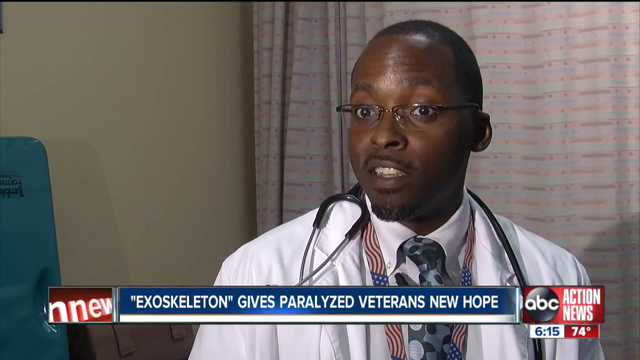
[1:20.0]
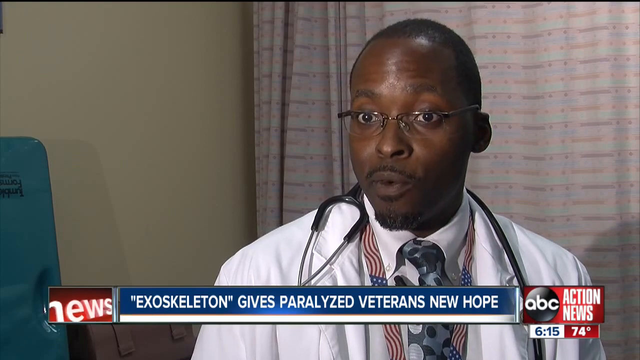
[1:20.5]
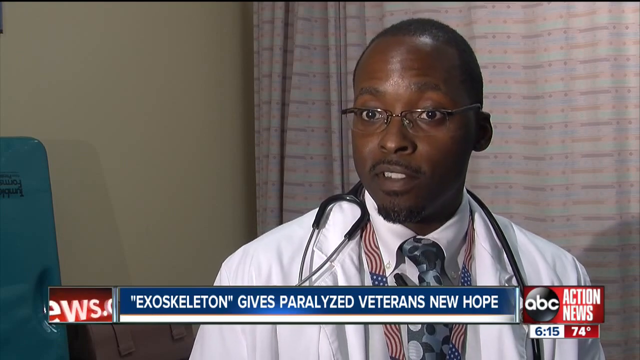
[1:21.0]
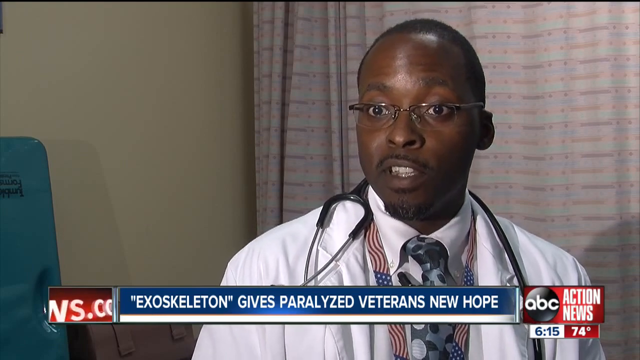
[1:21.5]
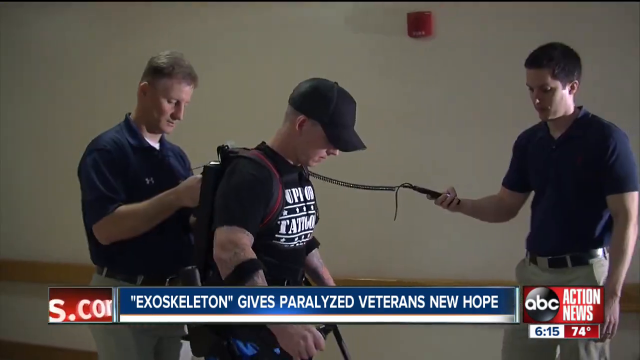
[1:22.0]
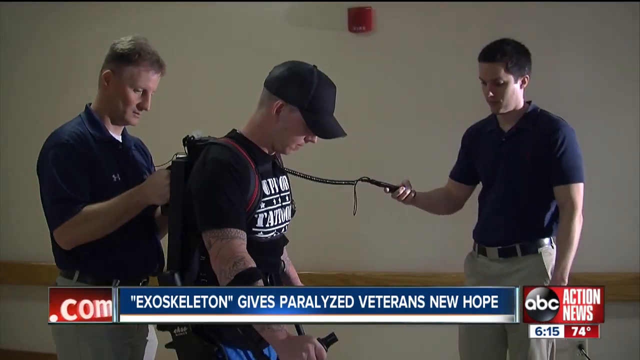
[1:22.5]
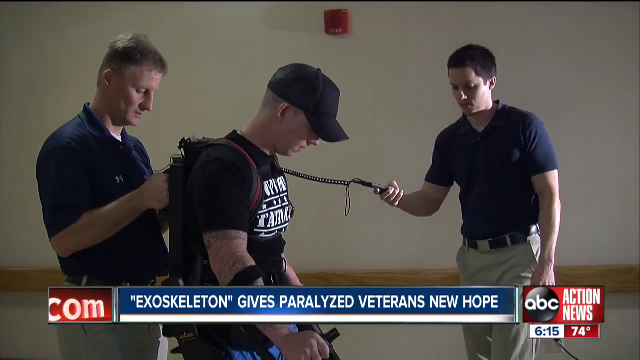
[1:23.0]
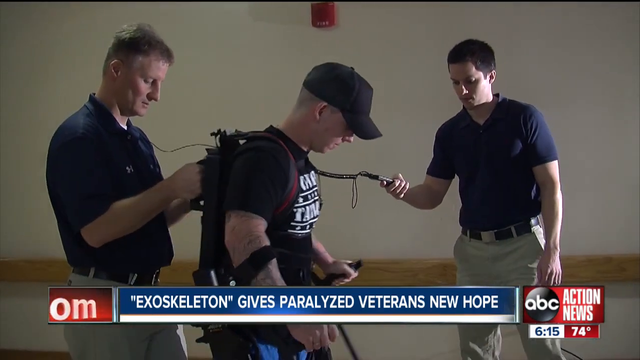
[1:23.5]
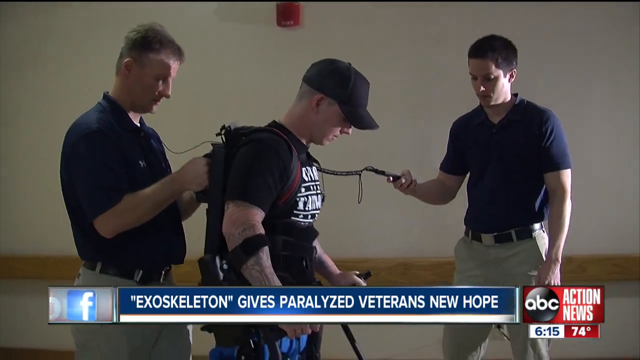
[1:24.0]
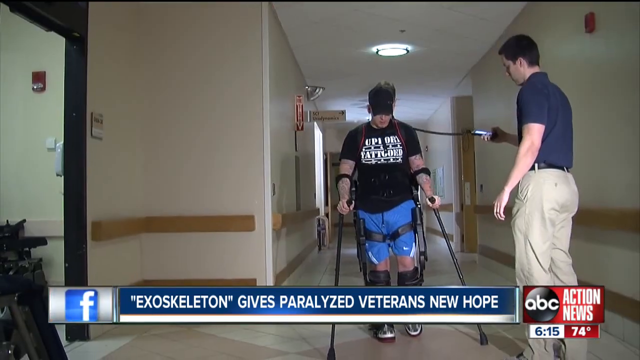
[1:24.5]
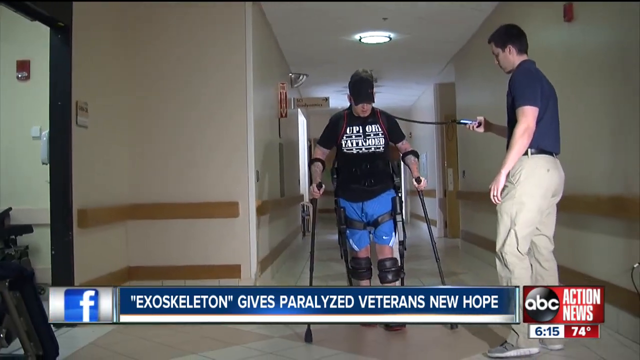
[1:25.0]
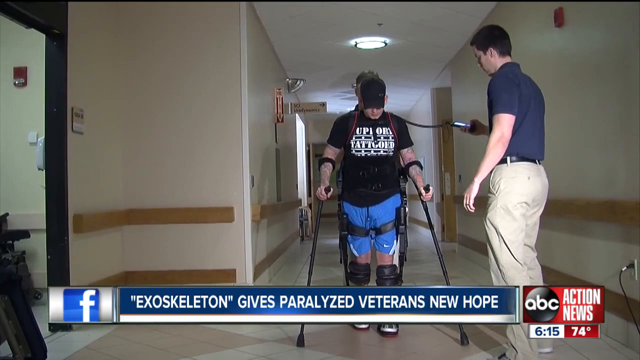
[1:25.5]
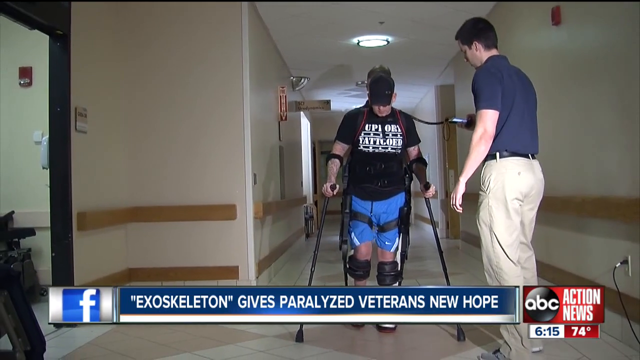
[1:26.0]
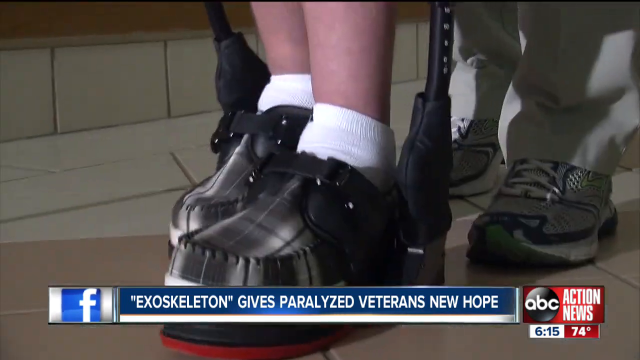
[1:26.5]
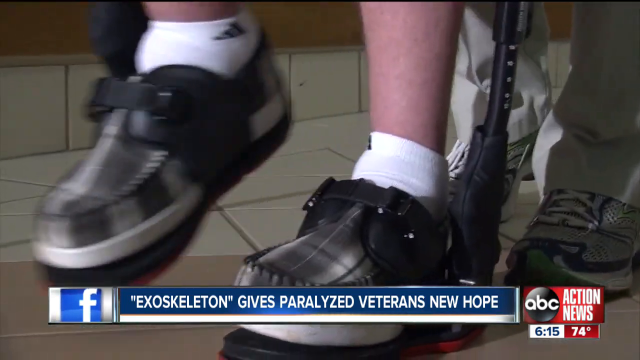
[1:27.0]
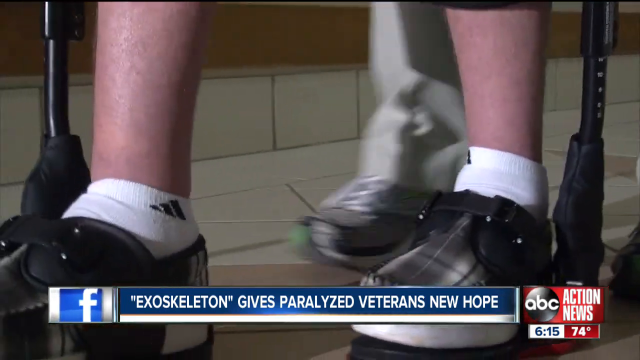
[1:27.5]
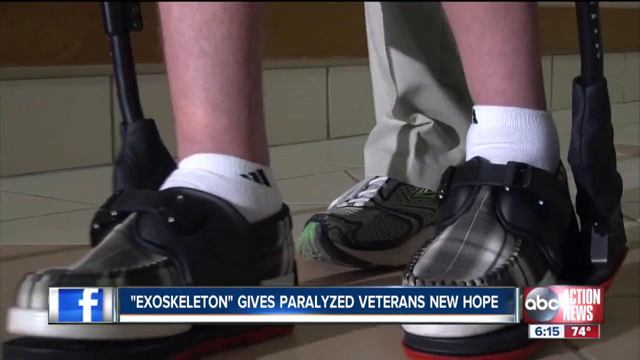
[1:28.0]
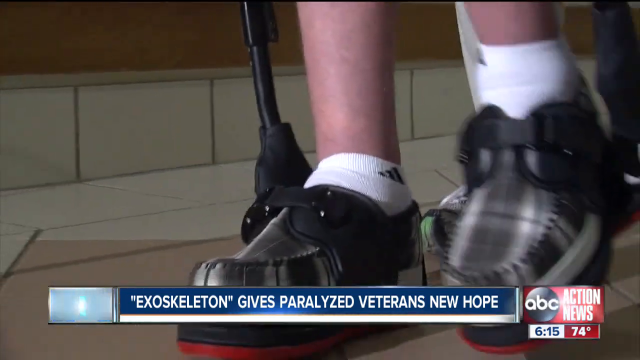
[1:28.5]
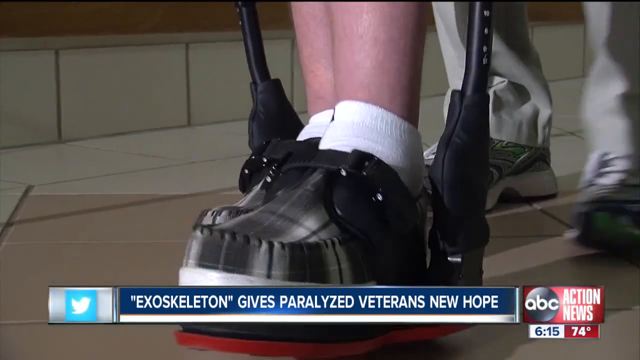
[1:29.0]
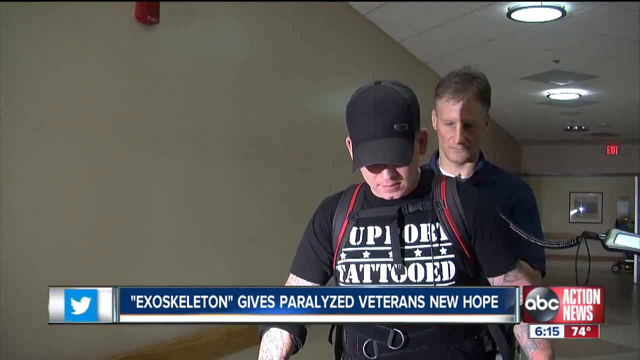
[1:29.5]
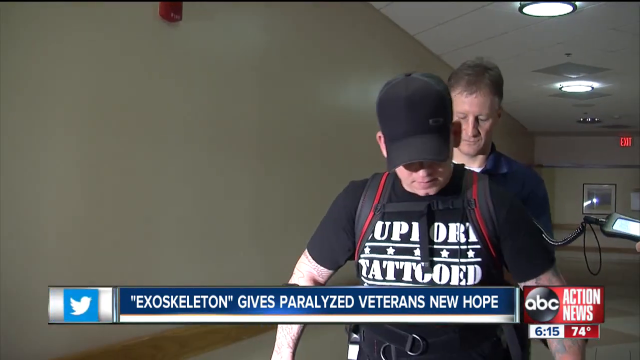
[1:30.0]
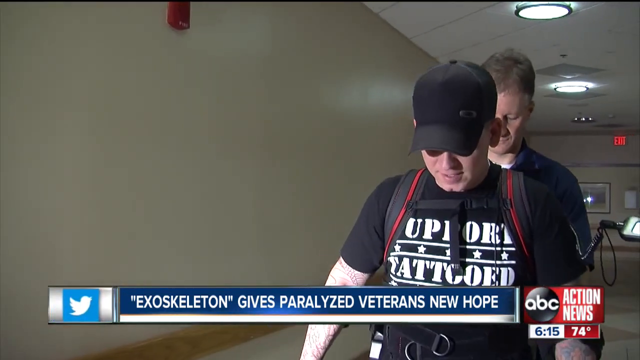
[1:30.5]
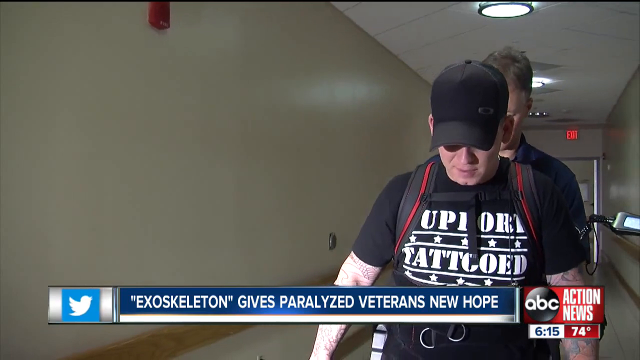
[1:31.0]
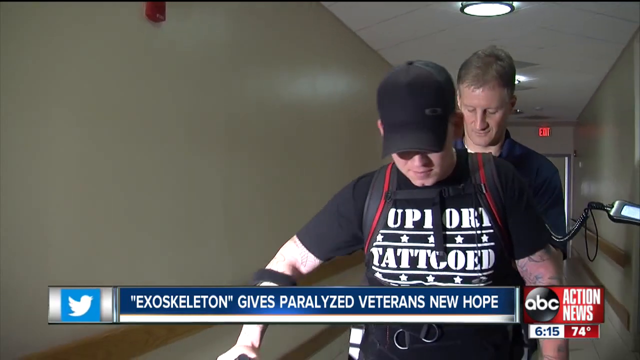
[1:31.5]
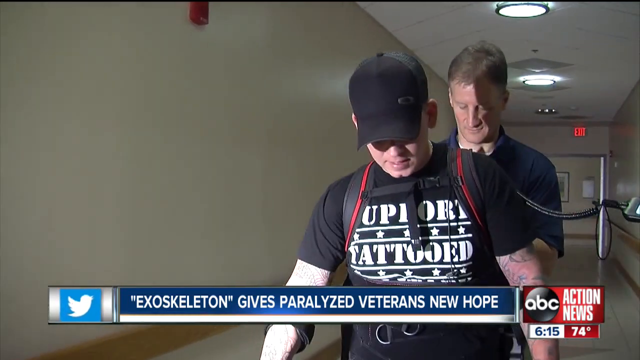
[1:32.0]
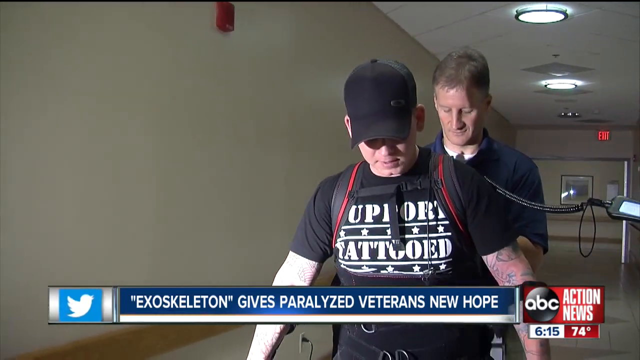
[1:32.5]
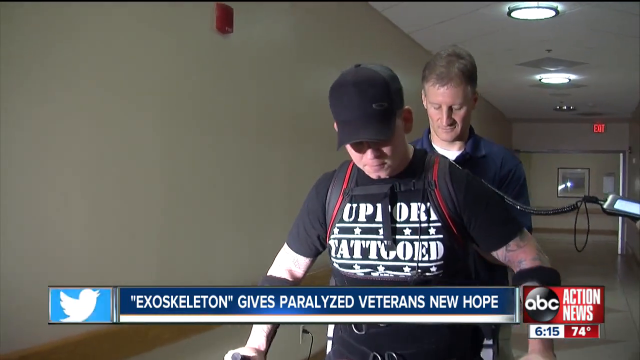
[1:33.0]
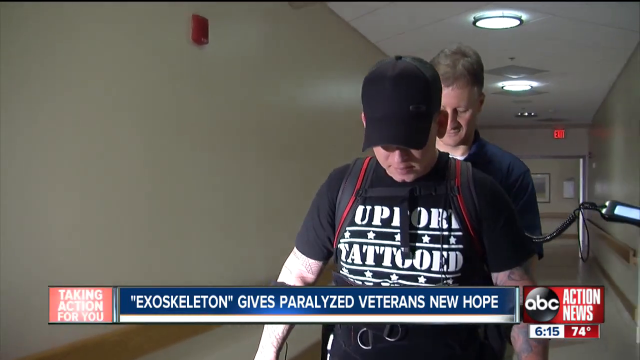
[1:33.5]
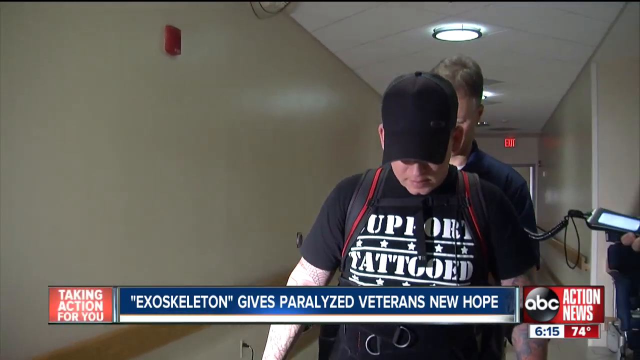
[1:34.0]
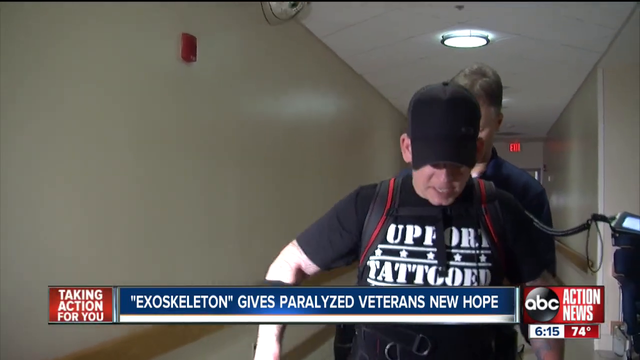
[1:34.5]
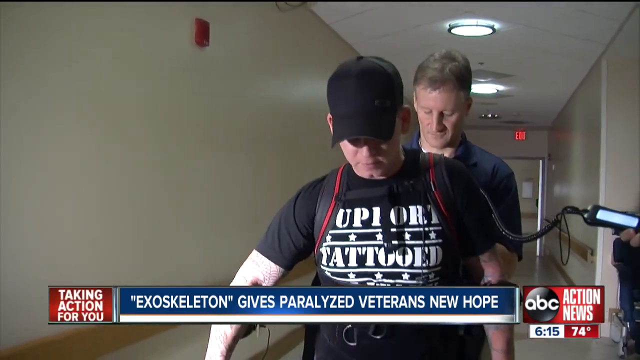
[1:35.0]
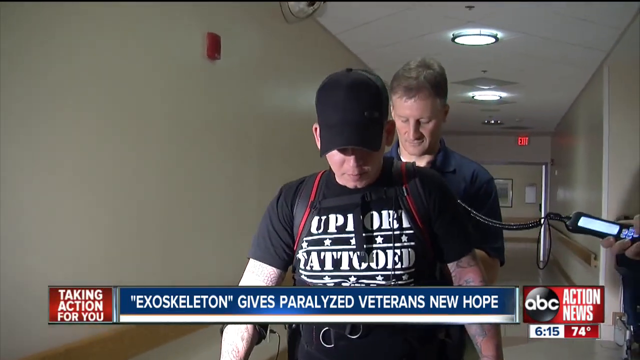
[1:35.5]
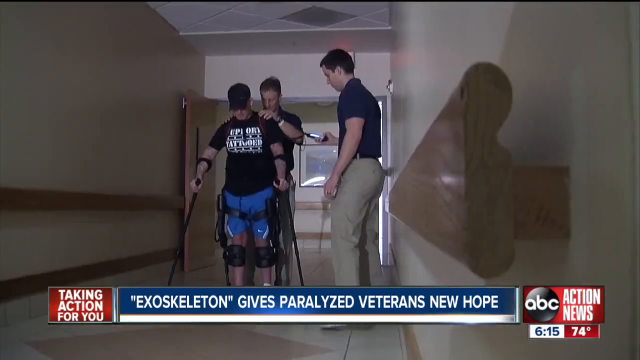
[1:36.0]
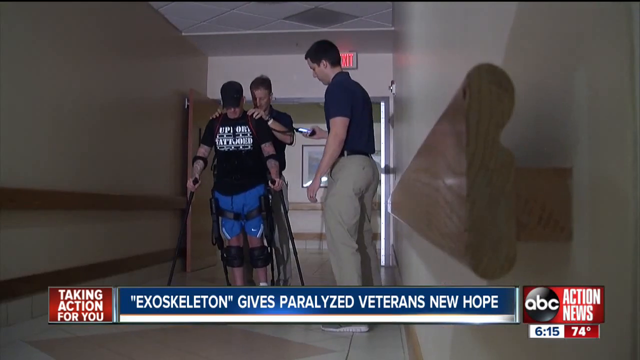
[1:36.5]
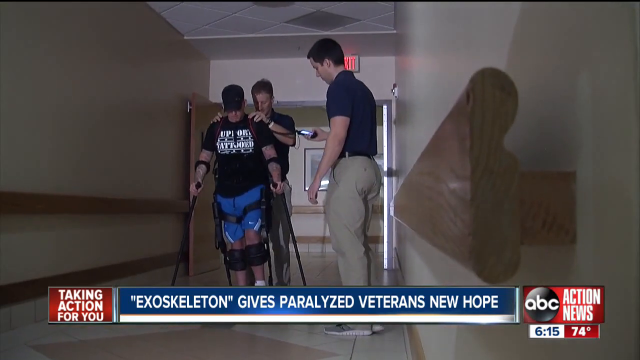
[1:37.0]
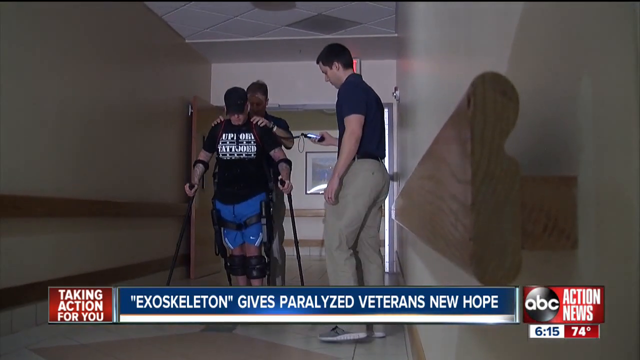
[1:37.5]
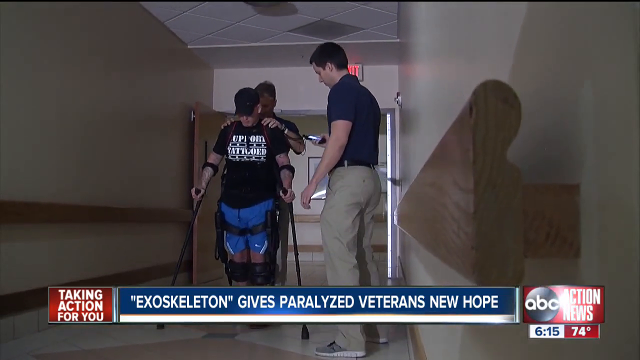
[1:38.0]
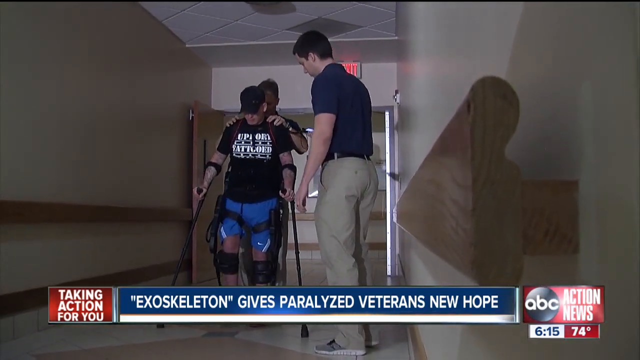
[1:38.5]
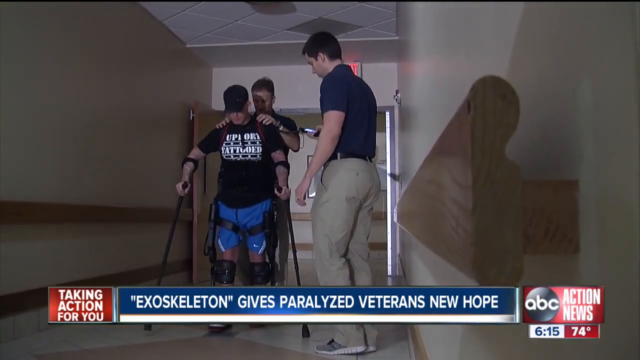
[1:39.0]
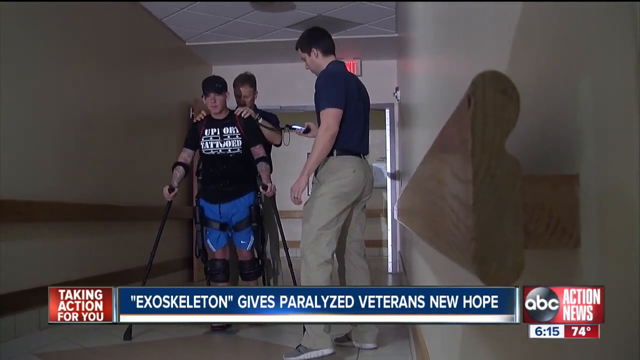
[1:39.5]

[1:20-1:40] In the ABC Action News story "Exoskeleton gives paralyzed veterans new hope," a physician in a white doctor's coat with a stethoscope resting around his neck speaks with confidence while being interviewed. A paralyzed veteran then walks through a hallway with assistance from two men, wearing some sort of backpack and a leg brace and using crutches. He is a bit wobbly and shaky but making progress. A close-up shows his feet as they take steps, and he talks while walking. His legs are strapped into braces, and there appears to be a battery backpack or something similar on his back. Of the two men walking with him, one monitors some kind of remote in his hand while the other braces the soldier's shoulders with his own hands.